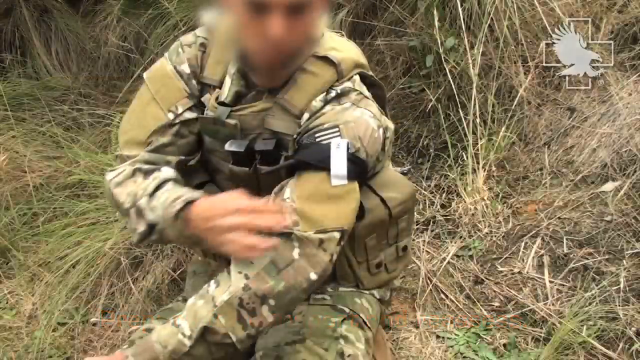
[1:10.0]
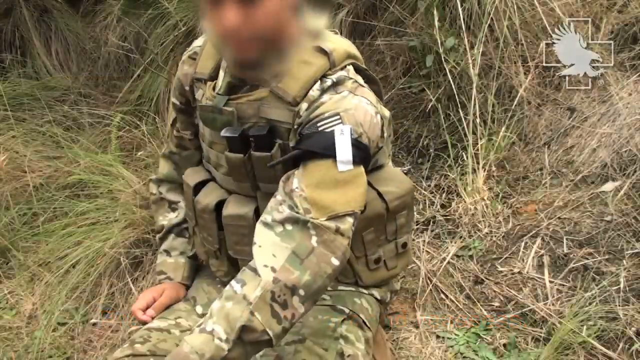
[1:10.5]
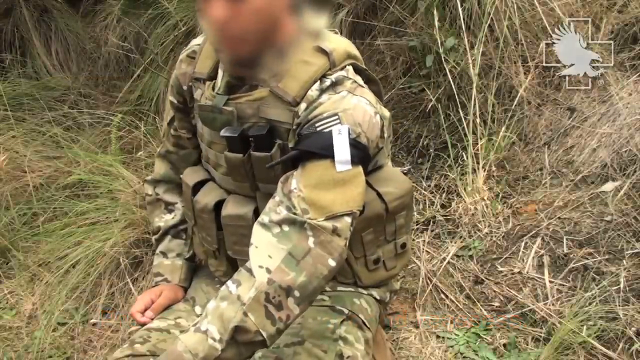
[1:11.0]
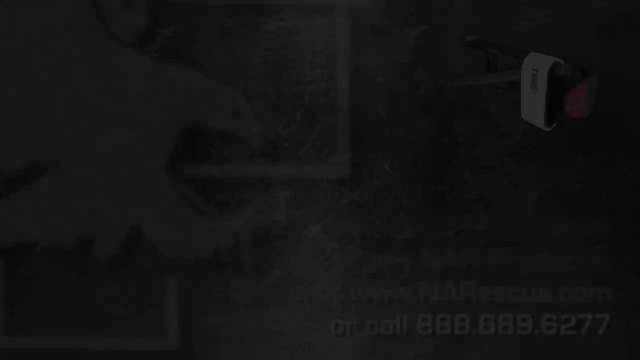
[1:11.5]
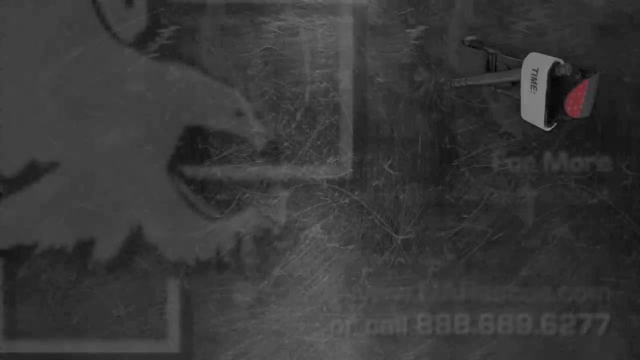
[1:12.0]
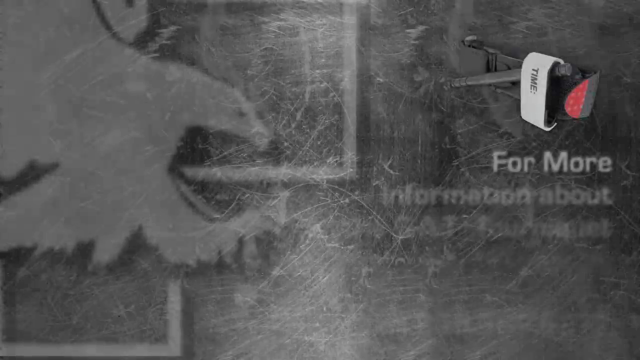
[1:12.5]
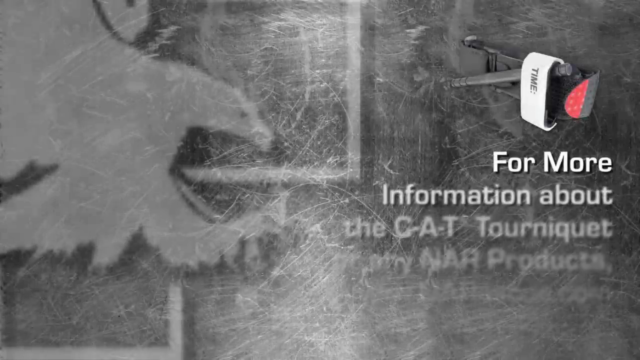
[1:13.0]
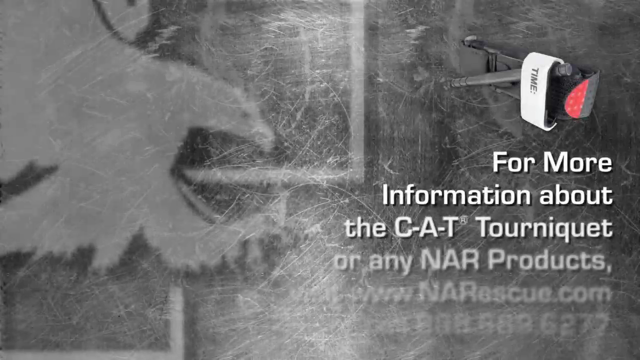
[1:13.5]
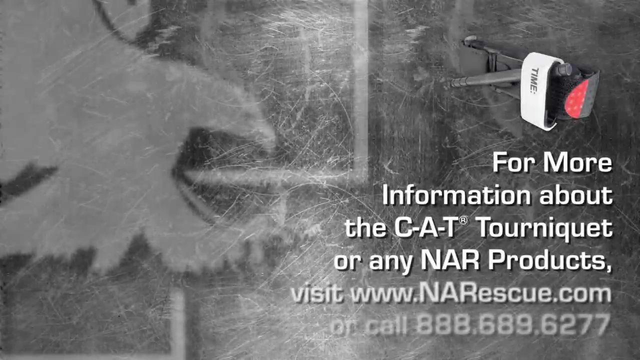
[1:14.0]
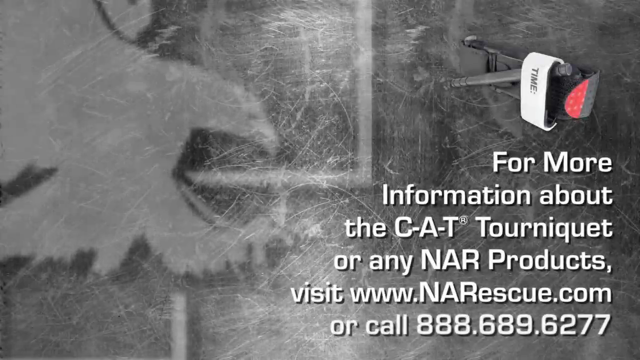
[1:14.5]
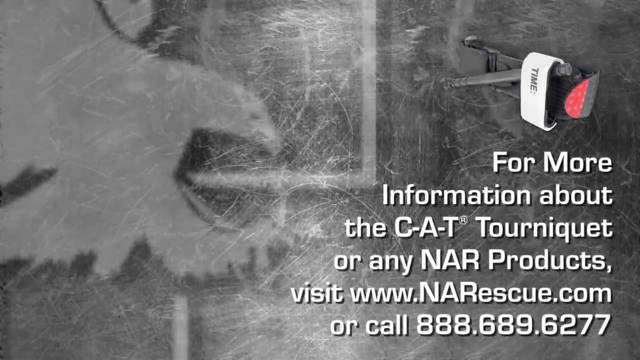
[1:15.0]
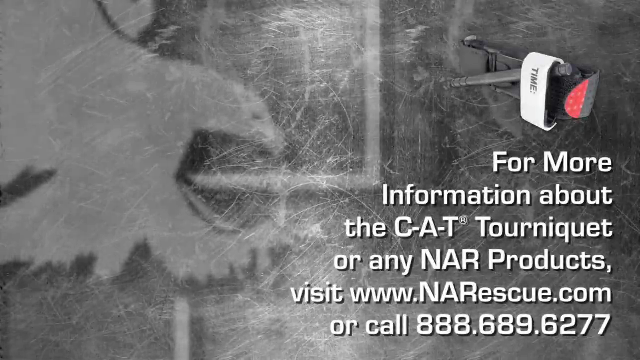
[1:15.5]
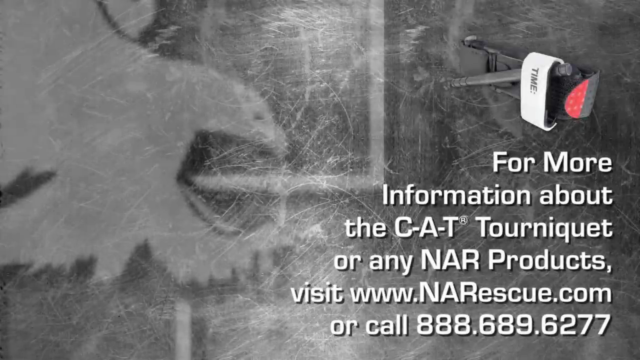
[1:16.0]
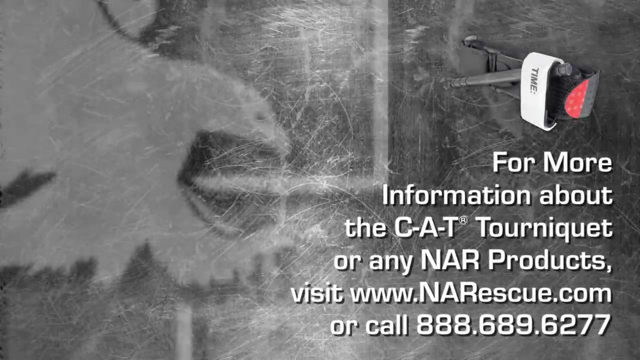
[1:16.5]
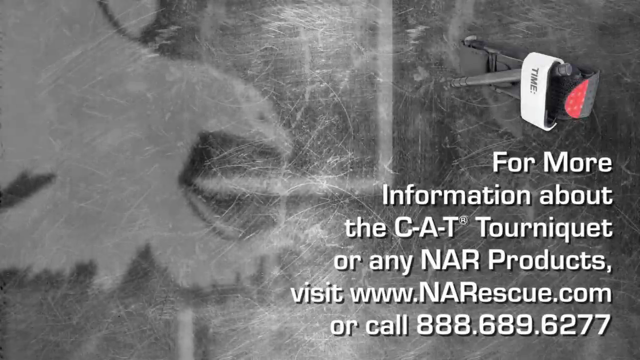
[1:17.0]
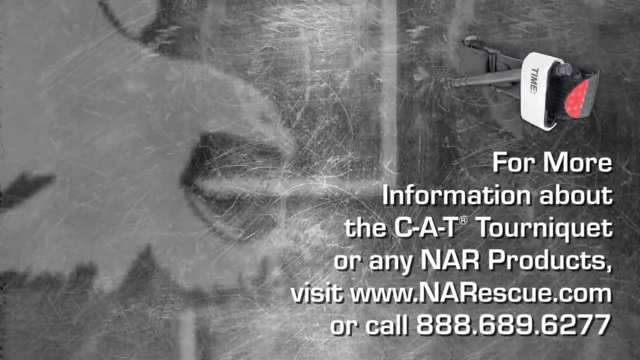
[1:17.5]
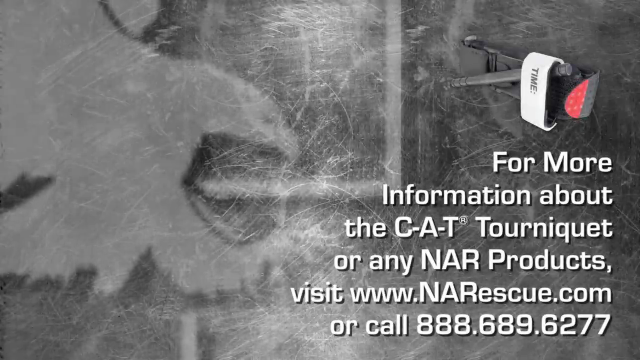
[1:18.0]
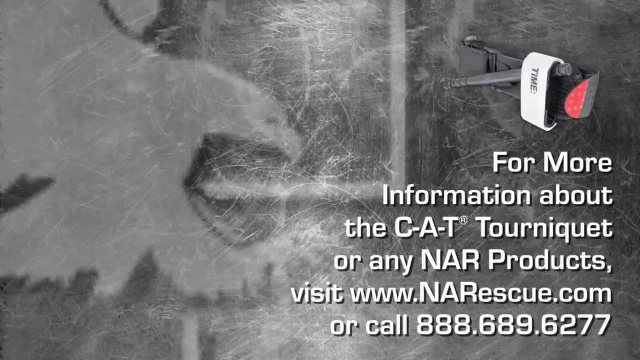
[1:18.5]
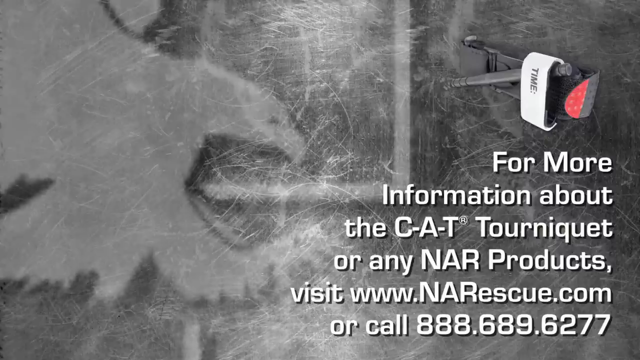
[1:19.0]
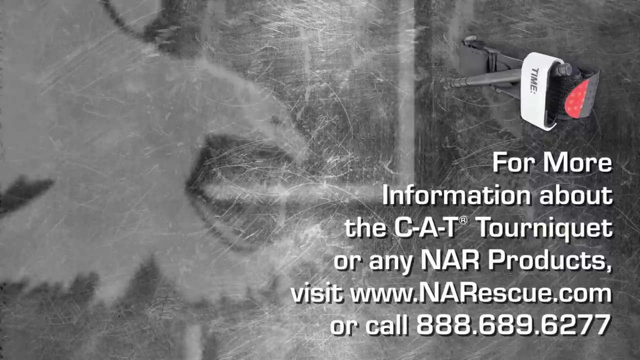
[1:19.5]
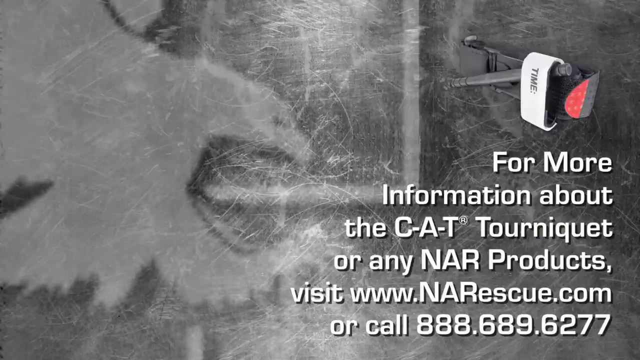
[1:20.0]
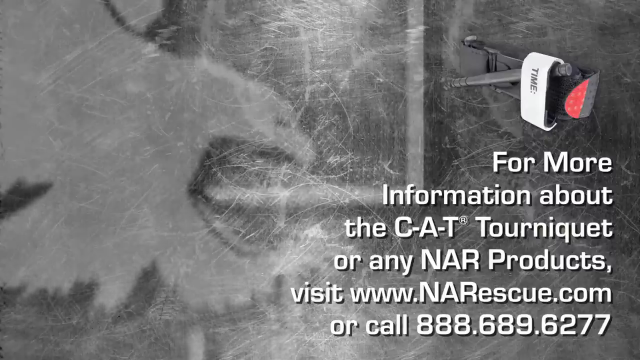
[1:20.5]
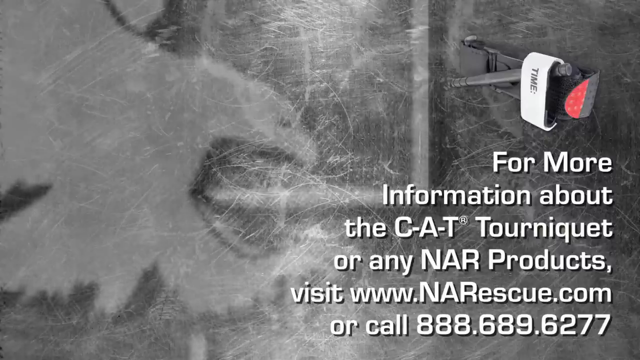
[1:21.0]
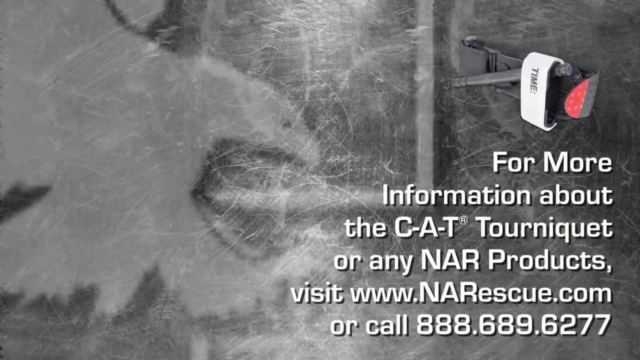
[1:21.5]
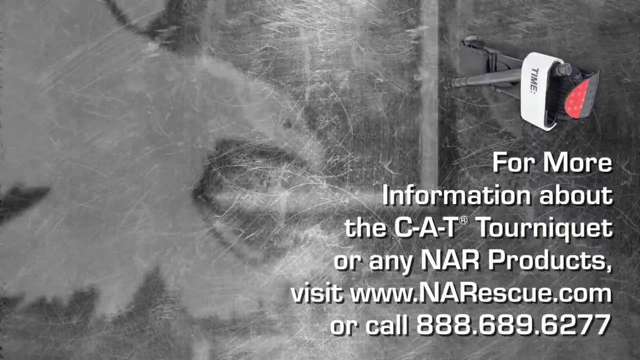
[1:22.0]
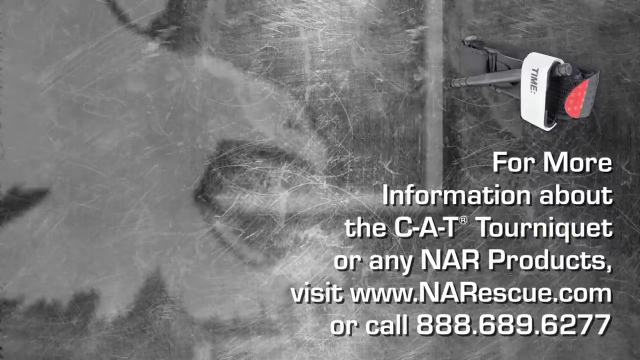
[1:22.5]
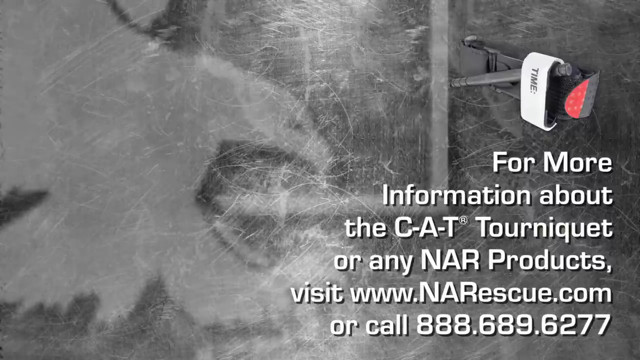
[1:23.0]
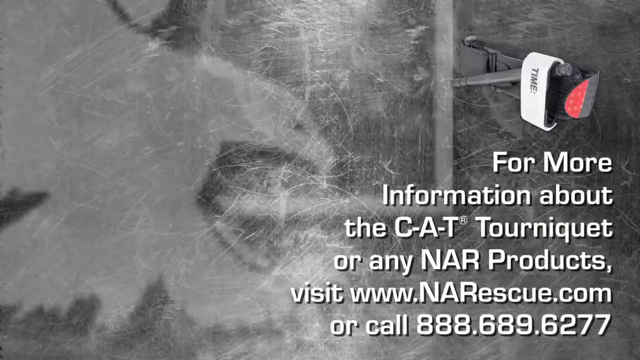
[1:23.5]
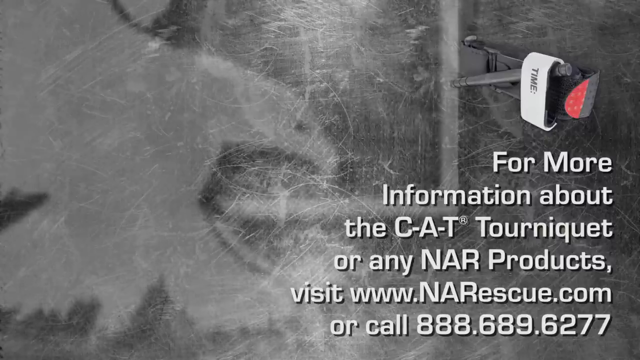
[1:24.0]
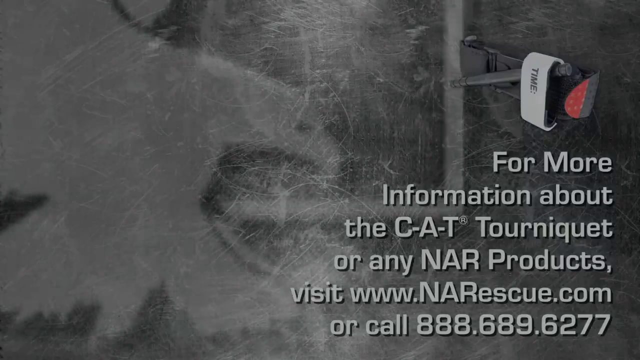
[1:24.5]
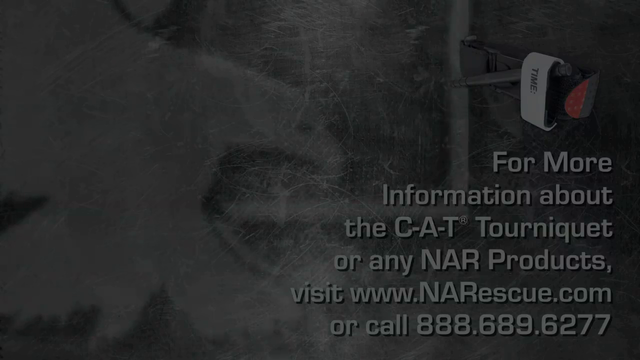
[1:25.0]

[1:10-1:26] The video flashes to a logo and to the tourniquet band, which looks like it says "TME" on it. Text on the right reads "for more information about the Cat tourniquet or any DARA products, visit www.DARArescue.com or call 888.689.6277". On the left, an eagle graphic grows bigger and bigger on a grayish background, and then the video fades to black.